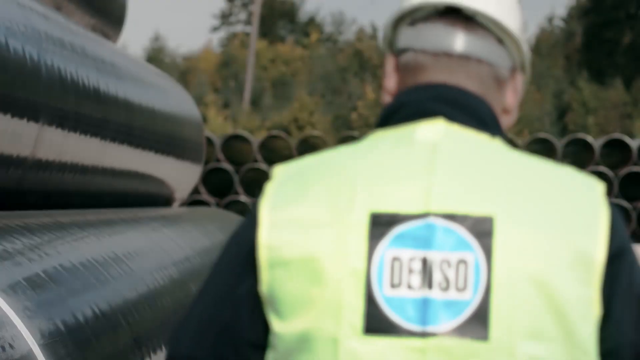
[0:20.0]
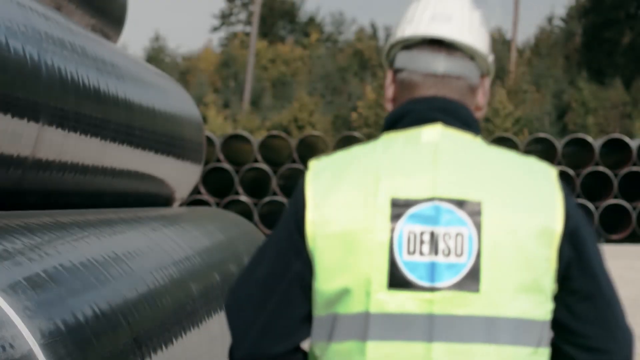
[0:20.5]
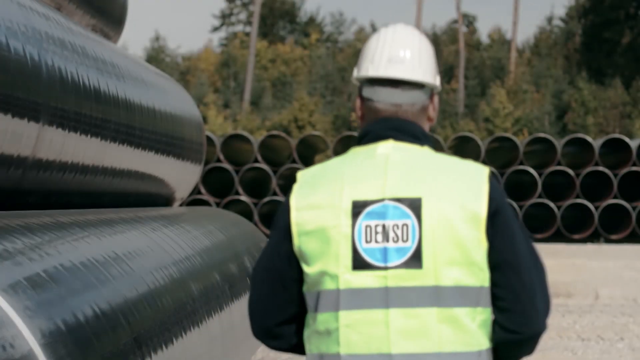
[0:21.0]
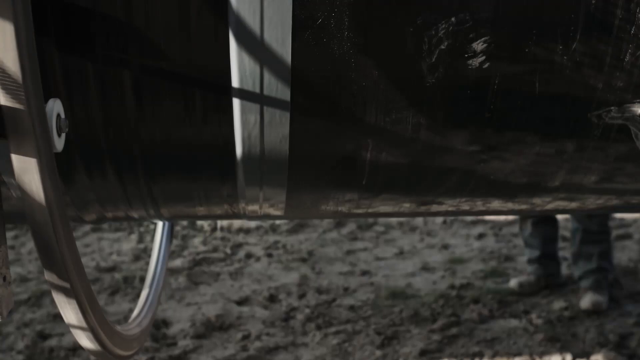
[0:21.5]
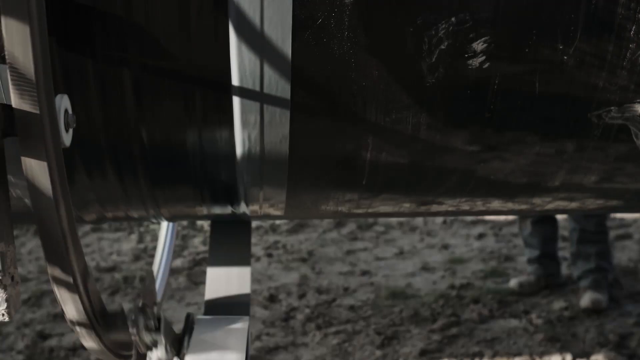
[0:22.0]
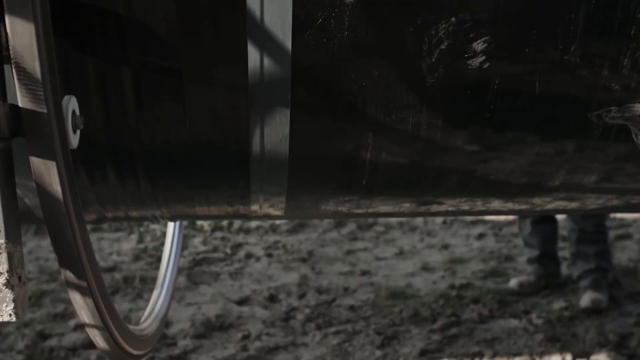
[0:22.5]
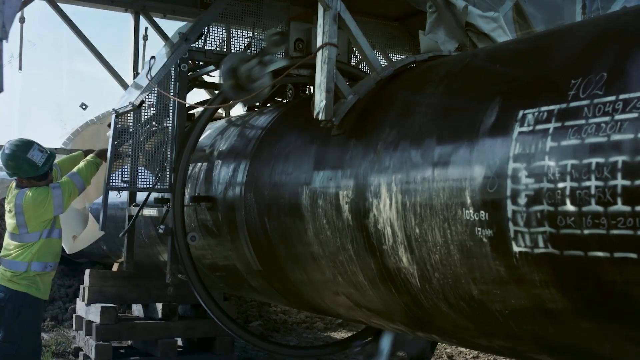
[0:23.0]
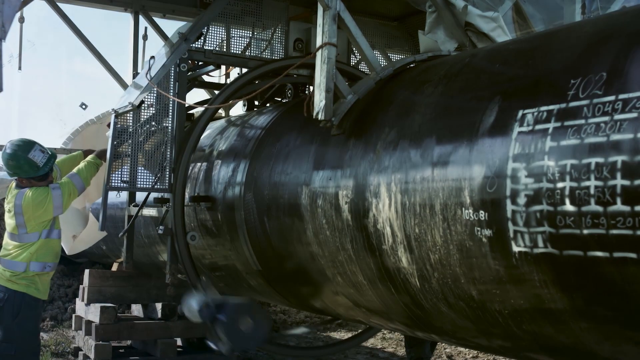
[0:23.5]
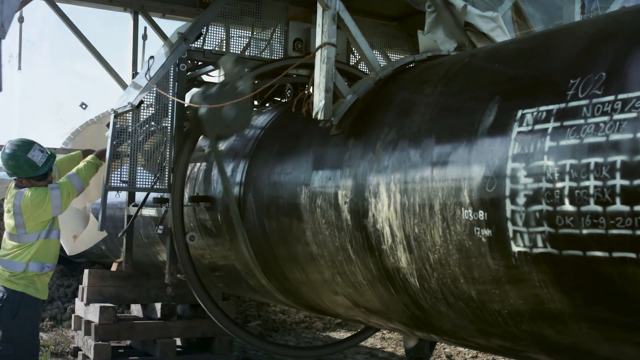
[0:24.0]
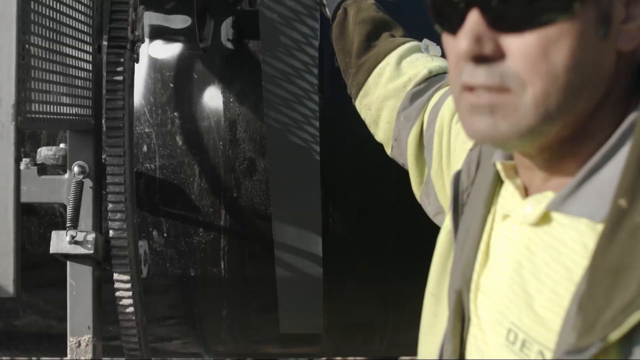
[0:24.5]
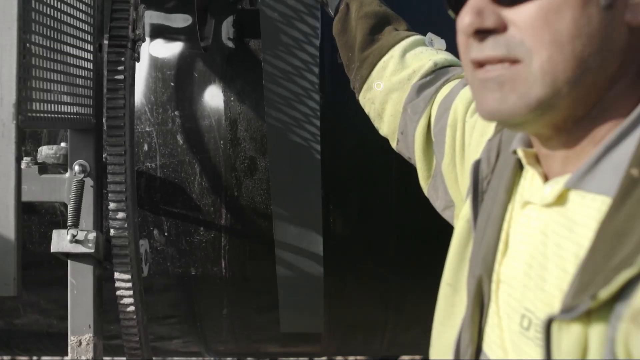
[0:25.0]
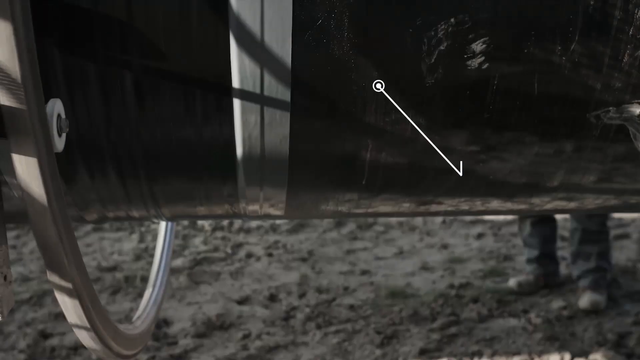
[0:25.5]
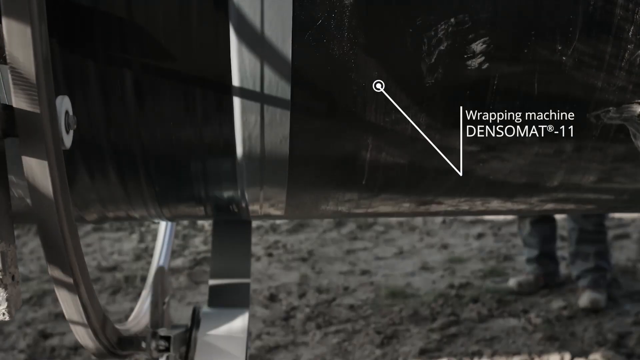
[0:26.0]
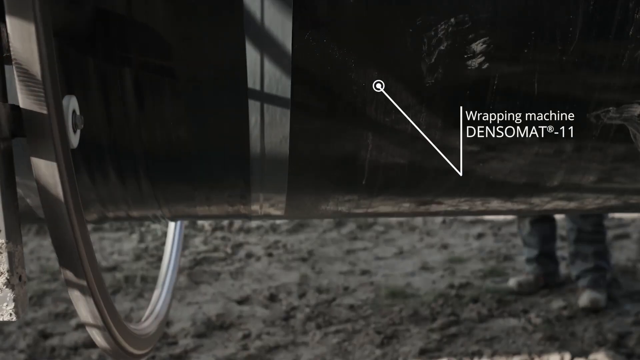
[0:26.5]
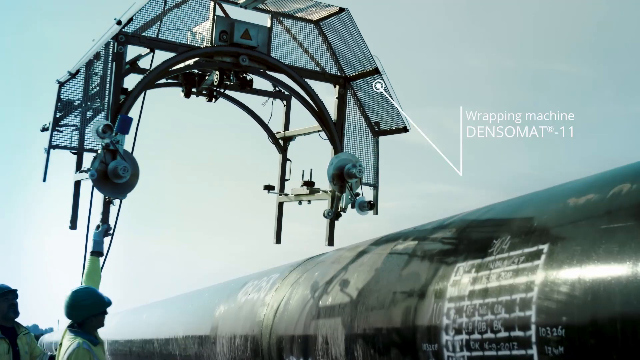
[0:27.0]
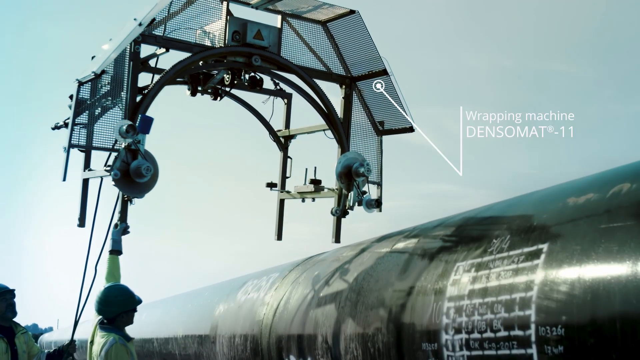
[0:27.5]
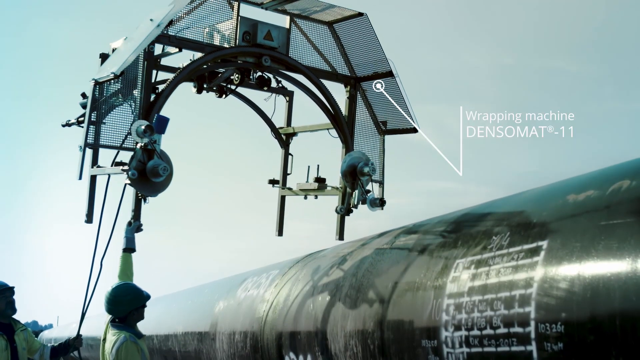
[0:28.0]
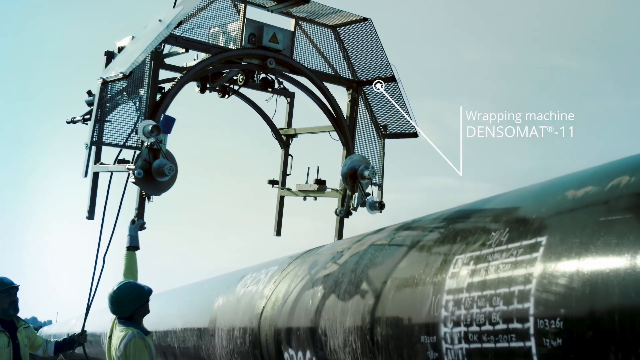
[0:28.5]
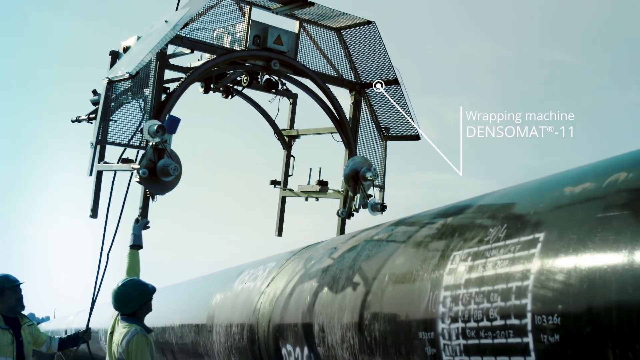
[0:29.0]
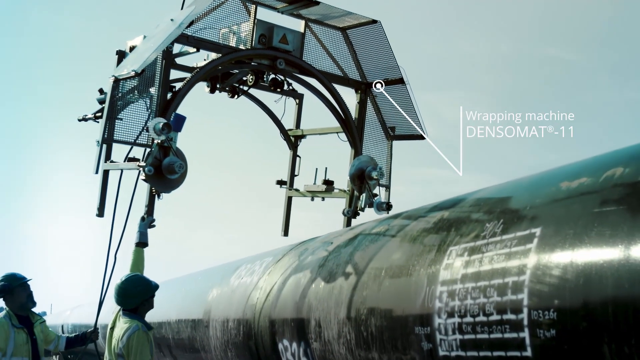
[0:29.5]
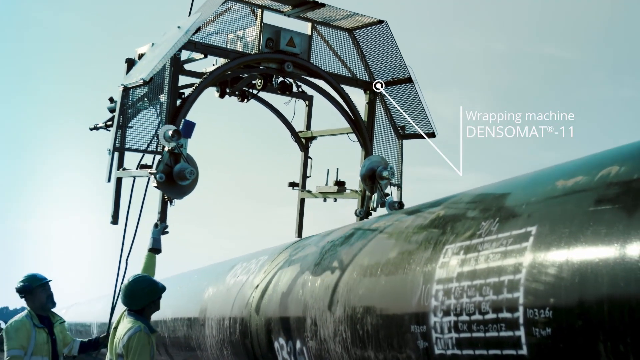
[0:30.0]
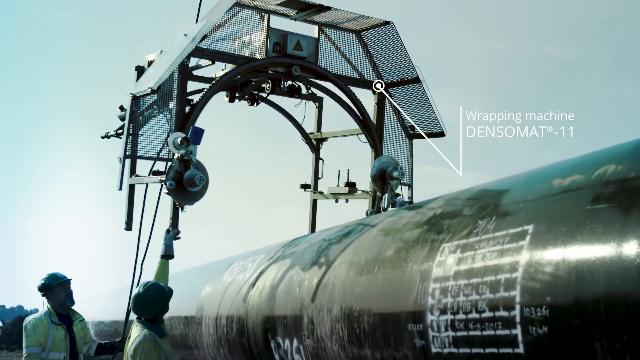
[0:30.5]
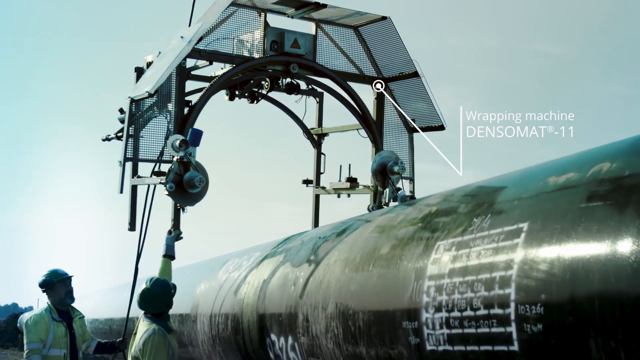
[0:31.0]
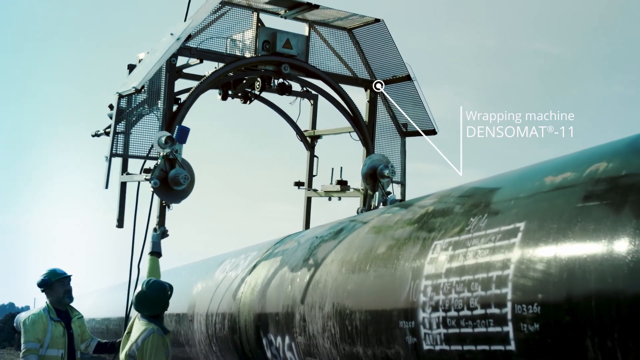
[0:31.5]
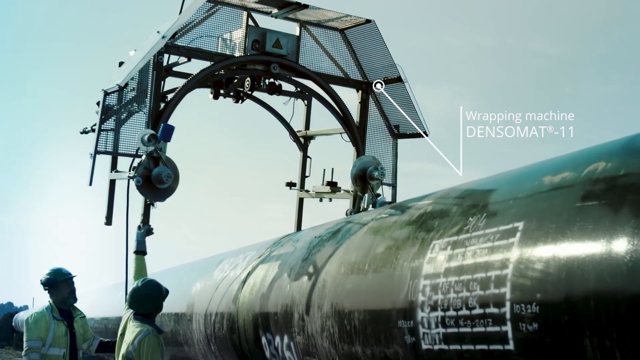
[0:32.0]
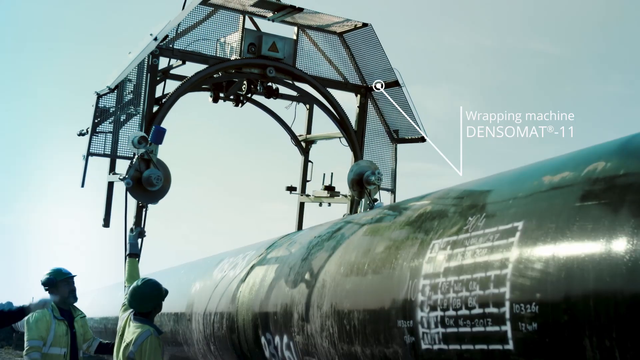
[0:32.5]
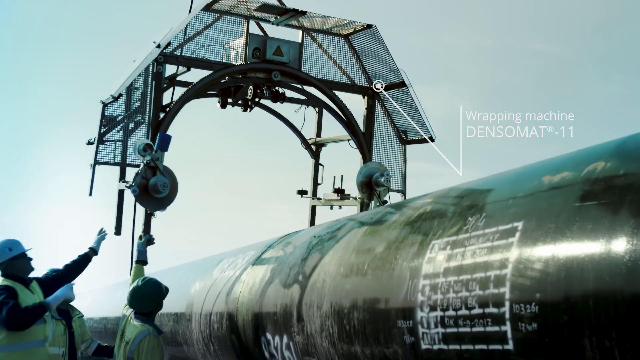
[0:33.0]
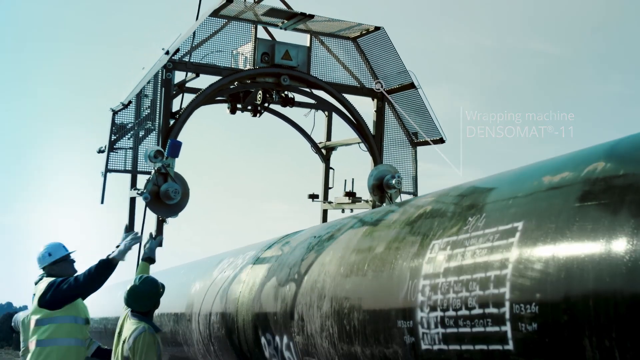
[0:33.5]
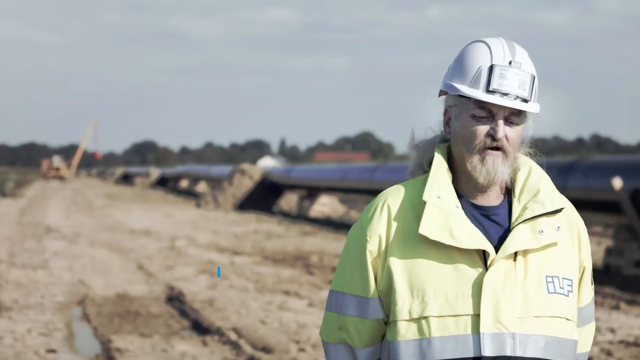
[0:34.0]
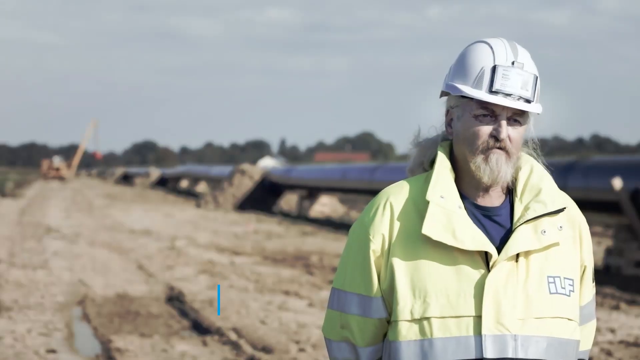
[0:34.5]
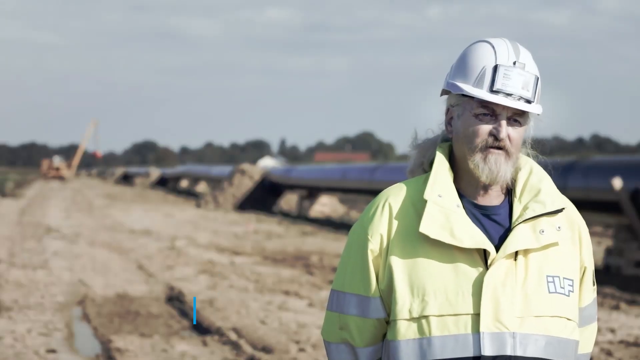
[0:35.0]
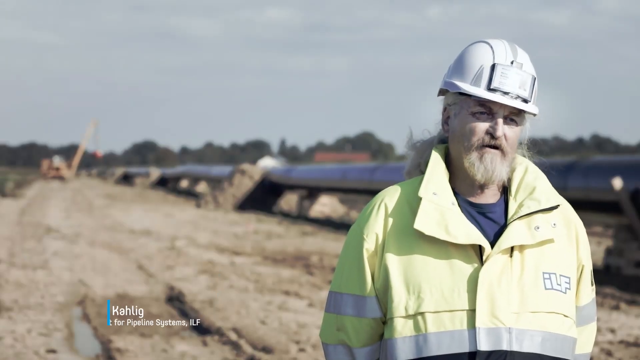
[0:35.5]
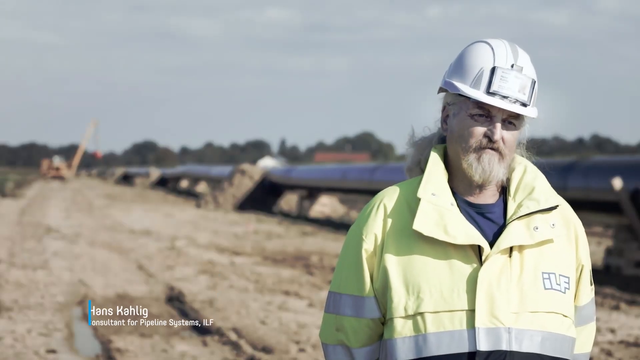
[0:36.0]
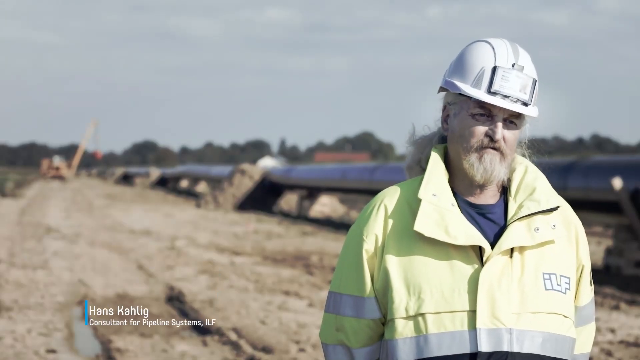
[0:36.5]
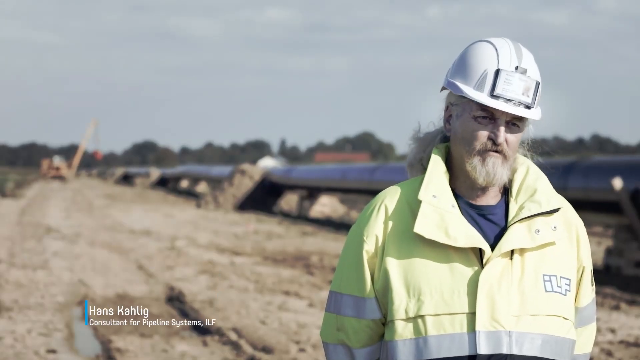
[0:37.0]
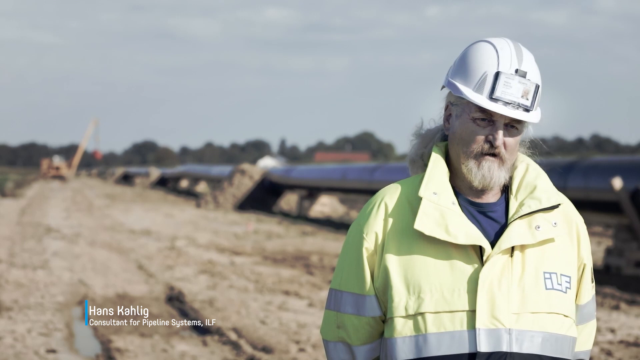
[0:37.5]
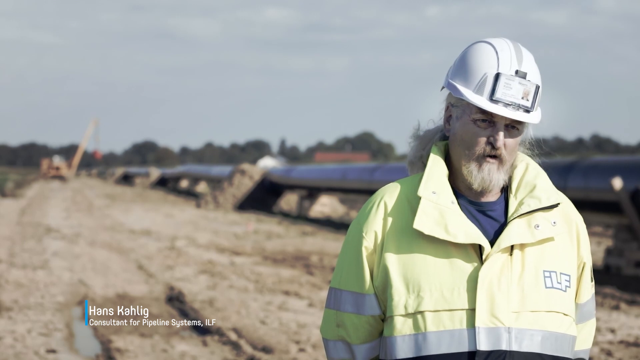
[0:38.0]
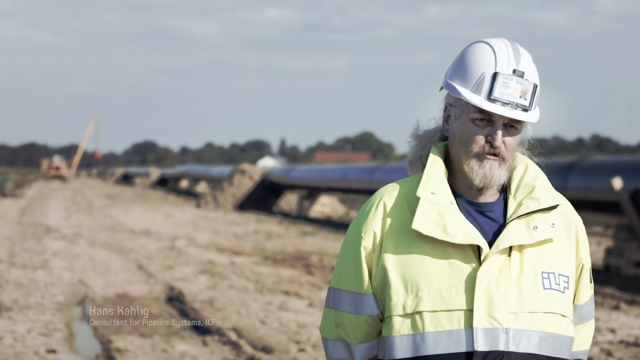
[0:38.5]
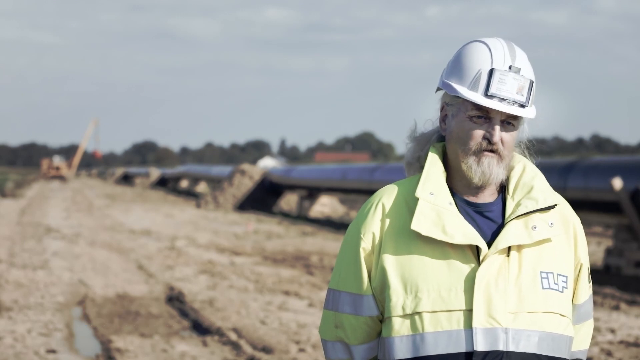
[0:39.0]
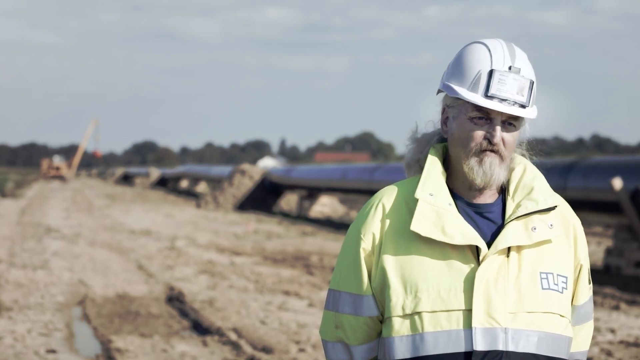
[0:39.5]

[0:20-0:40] A worker wears a work vest with his company's name, "Demsco," on the back. He works on a very large pipe, and something rotates around the pipe. A cap or screen that looks like a little tent for the pipe is airlifted and placed over the pipe; it is a wrapping machine, and its name is shown. Another man from the company is interviewed; "ILF" is on his jacket, and he has a very long gray beard and long gray hair in a ponytail. The workers appear to be working together in a pipe yard. Behind the bearded man, a pipe is already laid on top of the ground, looking like a functioning, permanent fixture on the land.